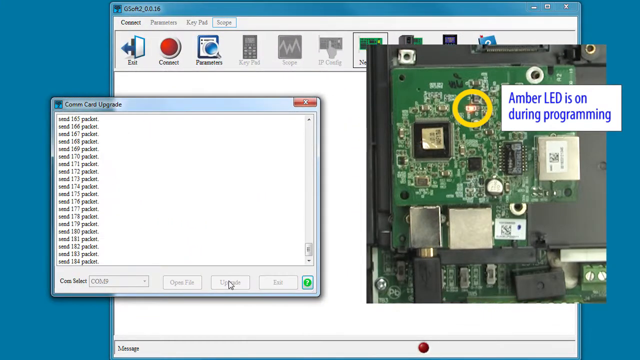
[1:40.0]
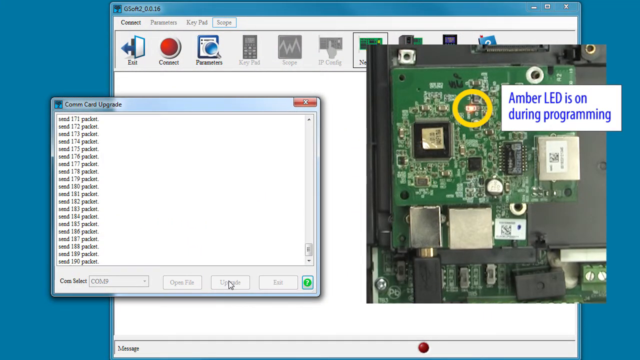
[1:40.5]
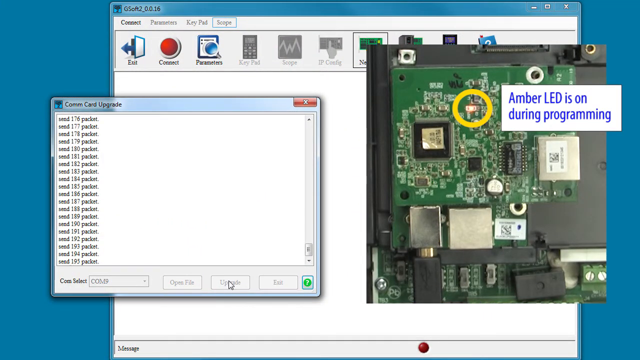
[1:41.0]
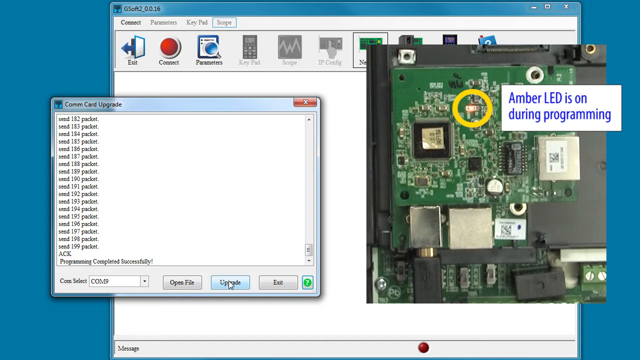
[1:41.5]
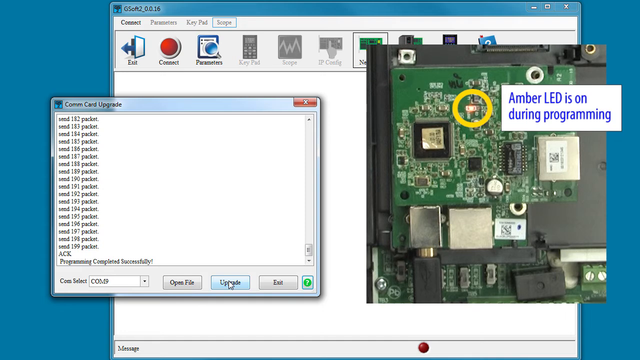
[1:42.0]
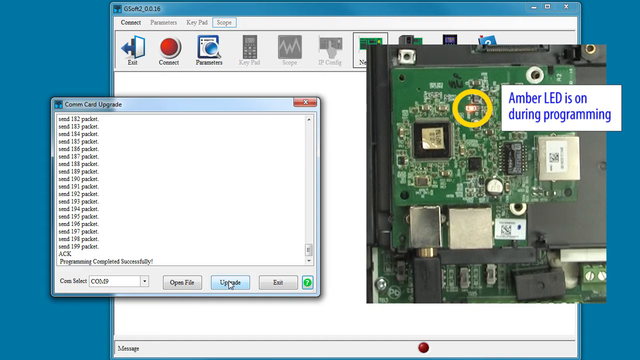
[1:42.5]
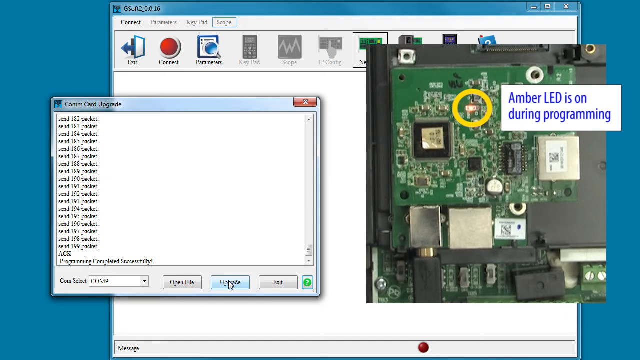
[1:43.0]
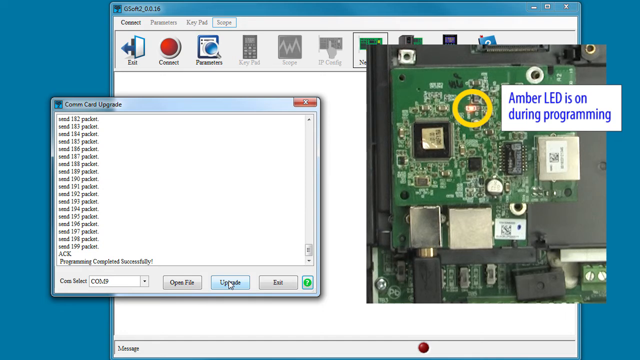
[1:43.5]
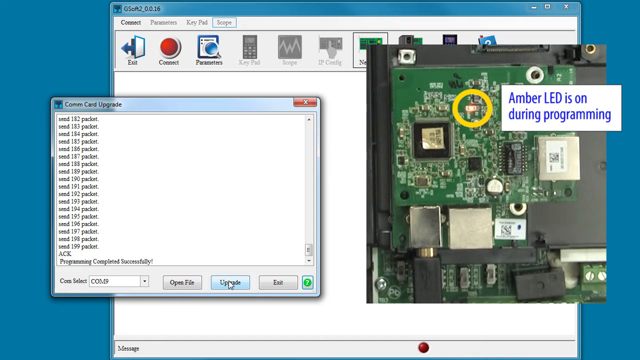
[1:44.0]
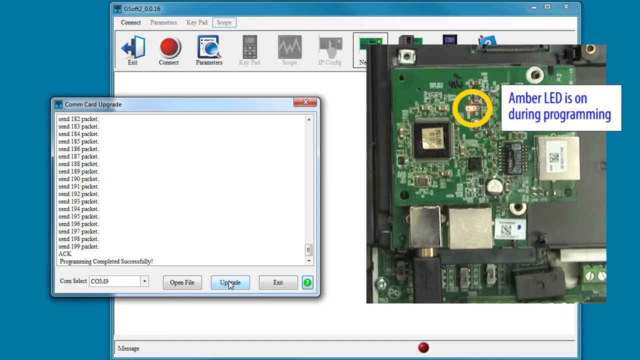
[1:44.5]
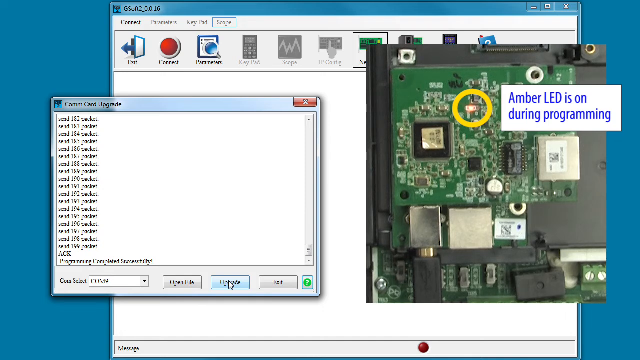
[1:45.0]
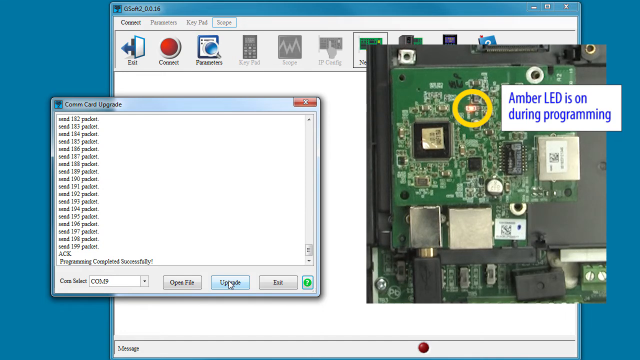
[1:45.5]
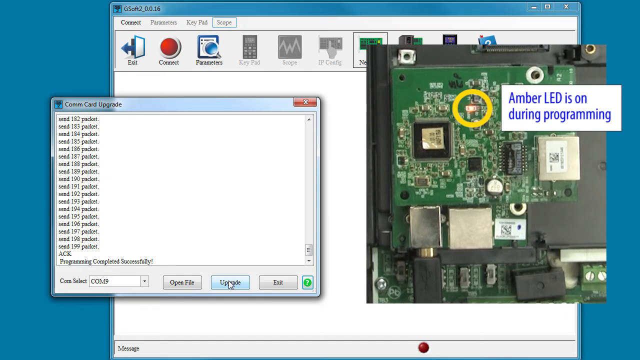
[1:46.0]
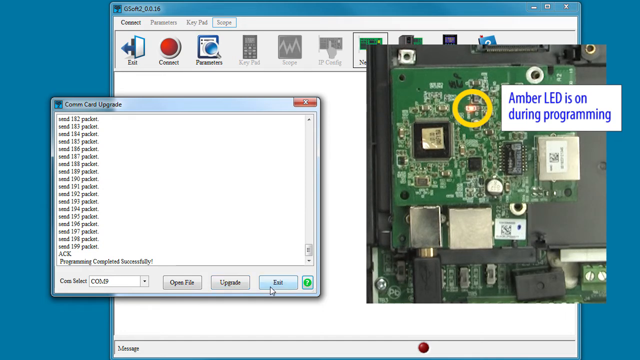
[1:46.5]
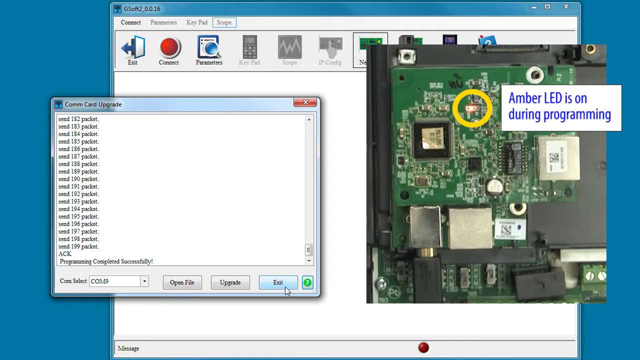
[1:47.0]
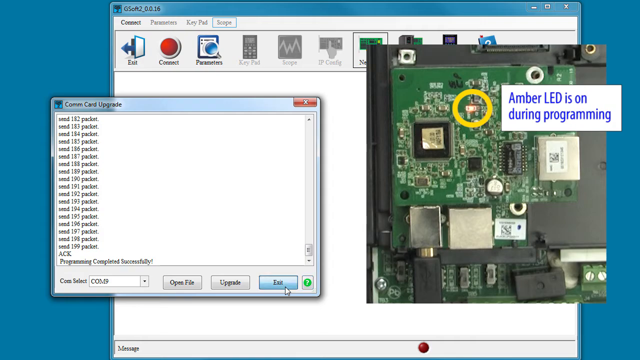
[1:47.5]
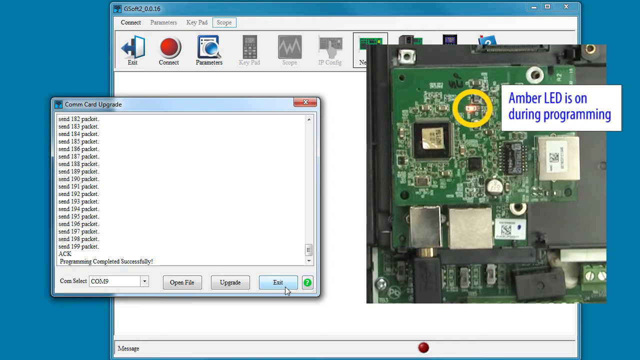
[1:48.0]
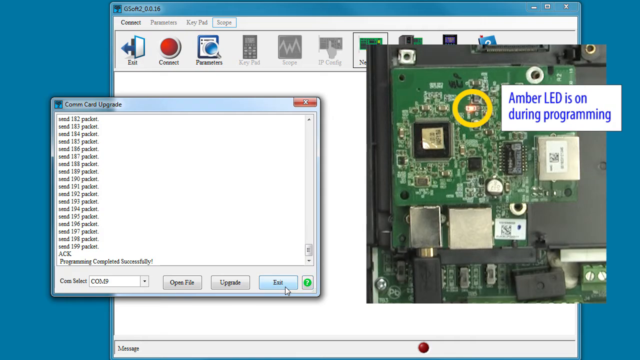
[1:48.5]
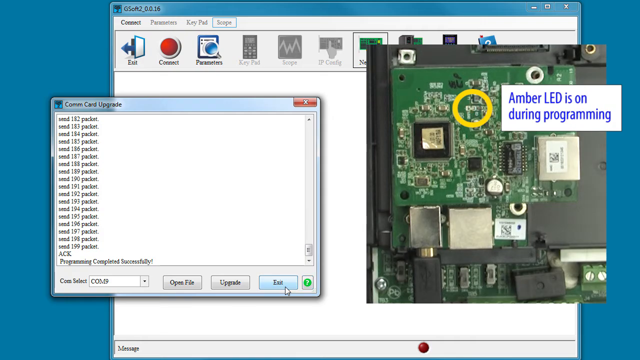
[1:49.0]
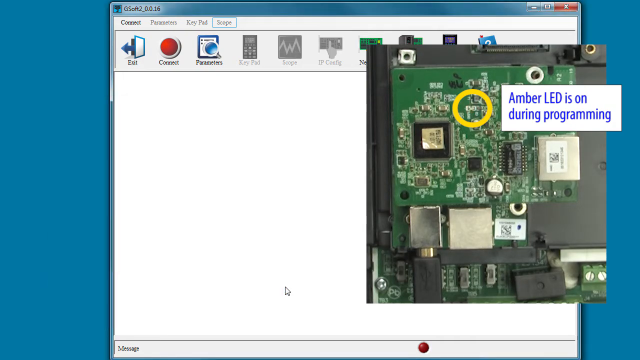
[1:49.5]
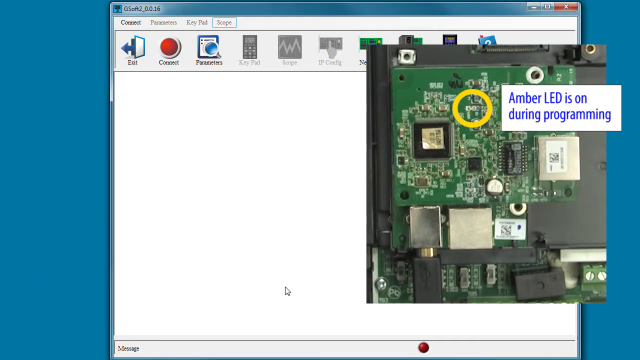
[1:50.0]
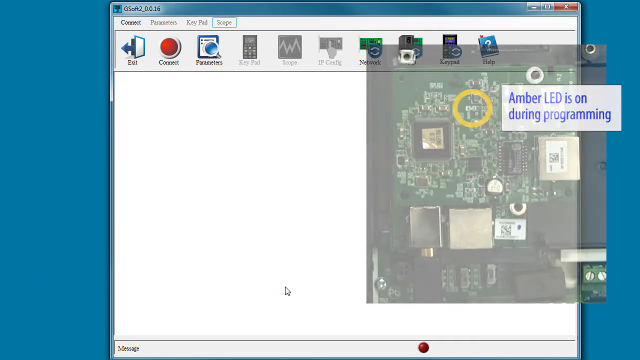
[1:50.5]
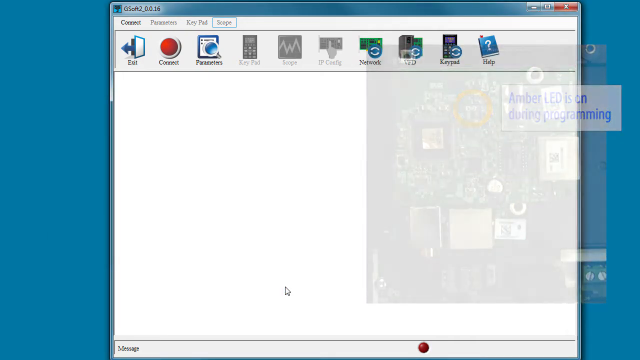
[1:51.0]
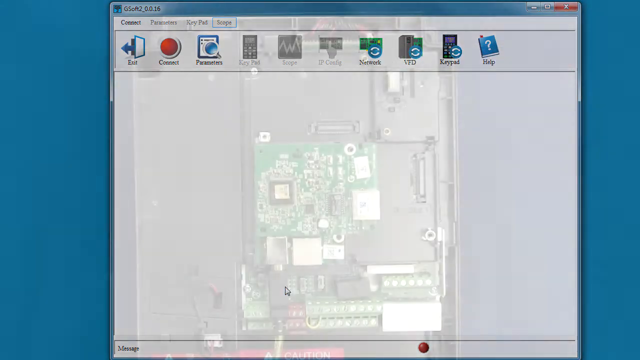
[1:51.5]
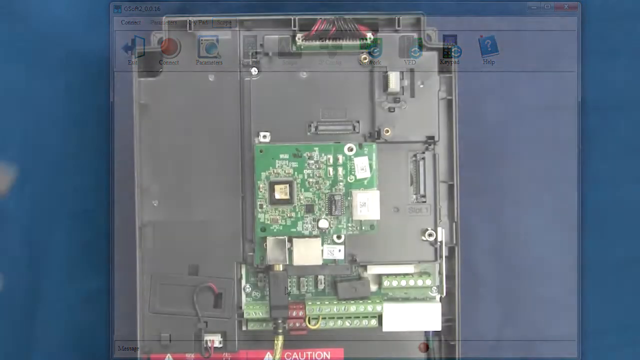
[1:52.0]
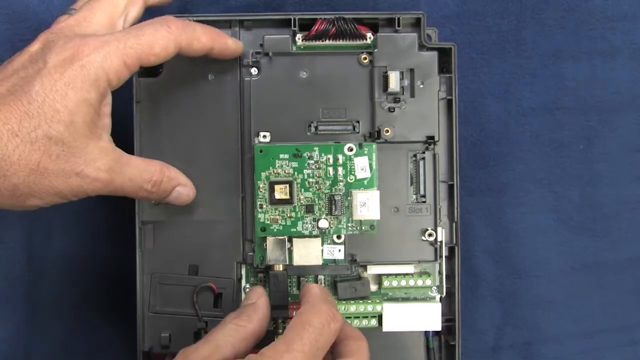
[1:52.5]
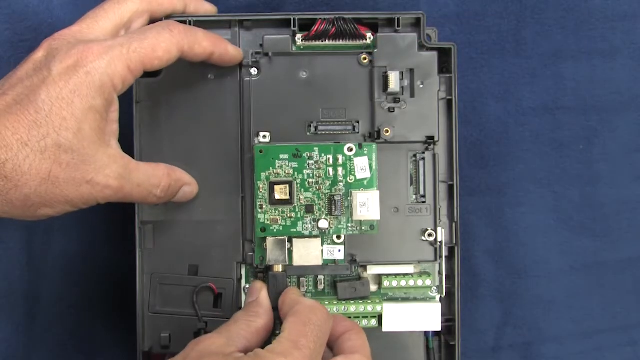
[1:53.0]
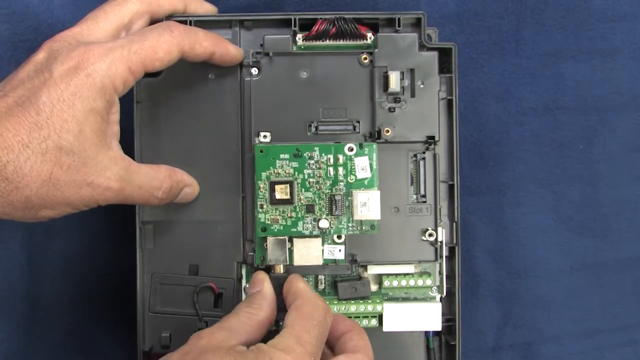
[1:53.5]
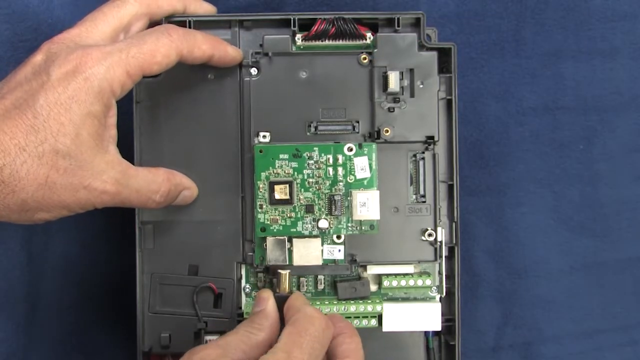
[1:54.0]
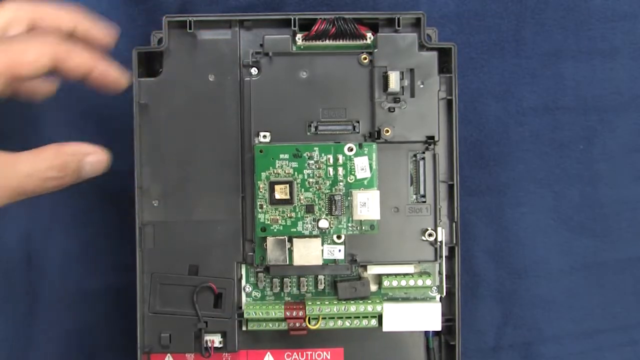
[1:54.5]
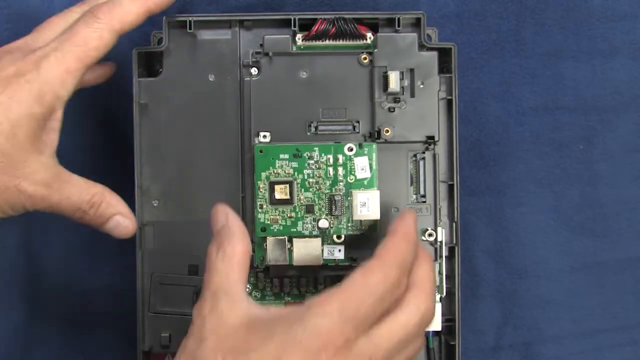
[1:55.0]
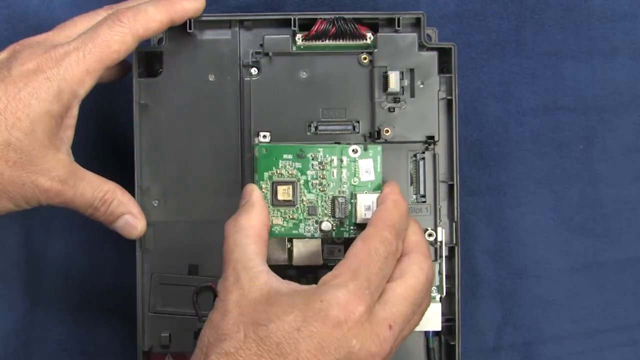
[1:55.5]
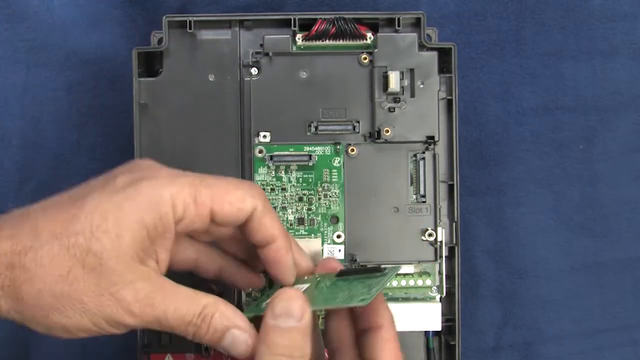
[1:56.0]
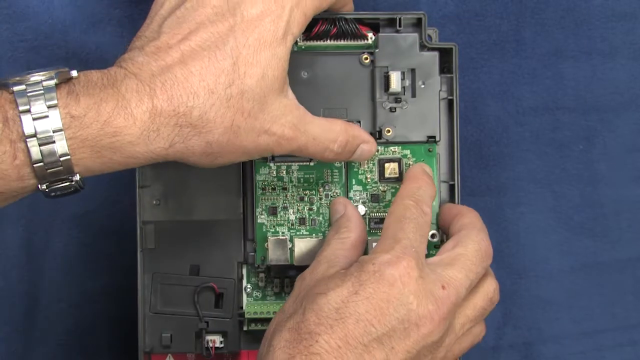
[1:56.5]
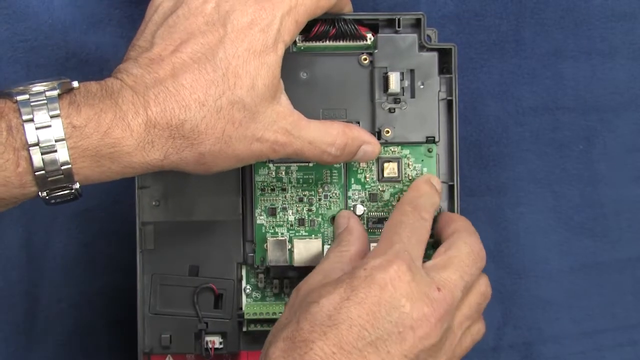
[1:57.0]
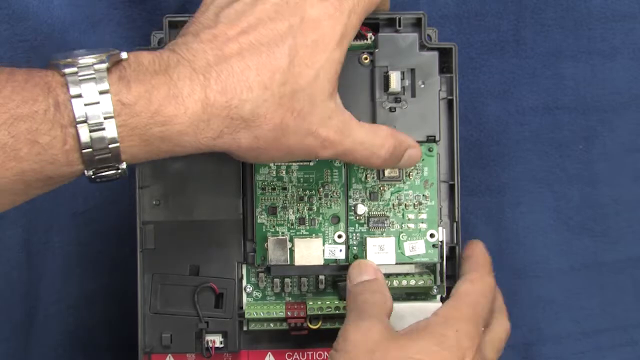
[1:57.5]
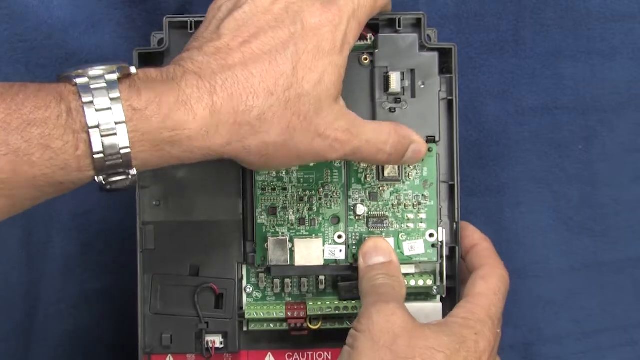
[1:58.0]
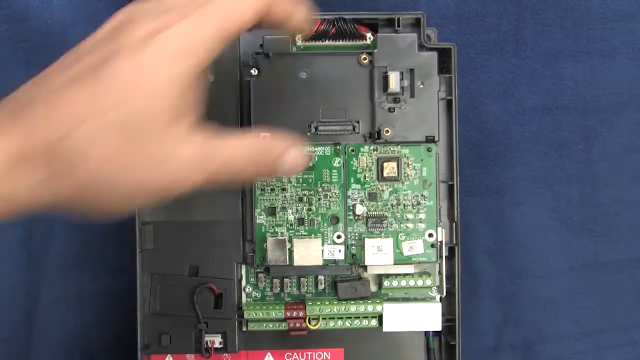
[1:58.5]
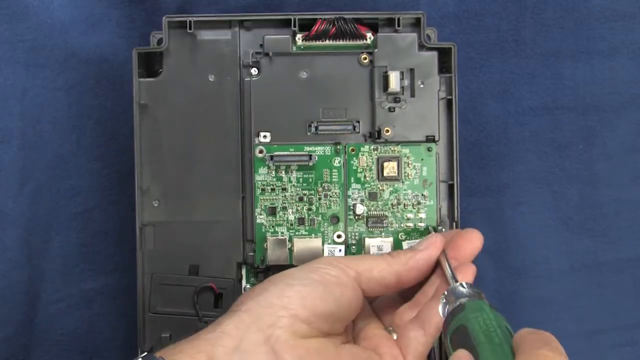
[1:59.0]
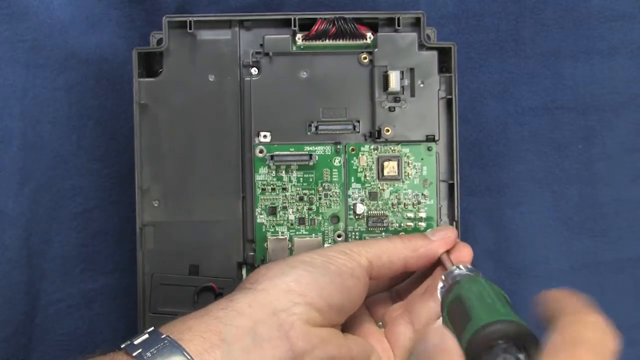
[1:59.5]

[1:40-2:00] The upgrade screen shows "send 184 packet" as it progresses, then shows "programming was completed successfully." The USB is then unplugged and the chip looks like it is being moved over. The text about the amber LED being on during programming is still shown, along with the same menu as before. Someone takes the com card out and turns it.